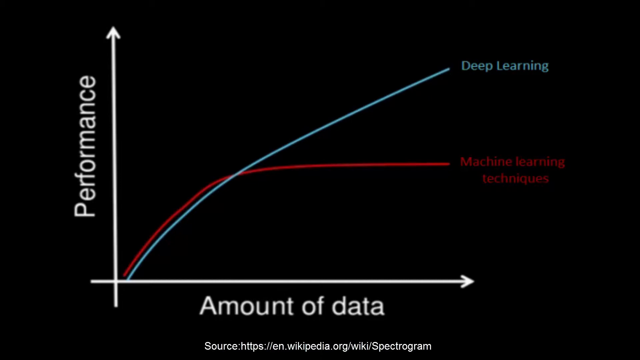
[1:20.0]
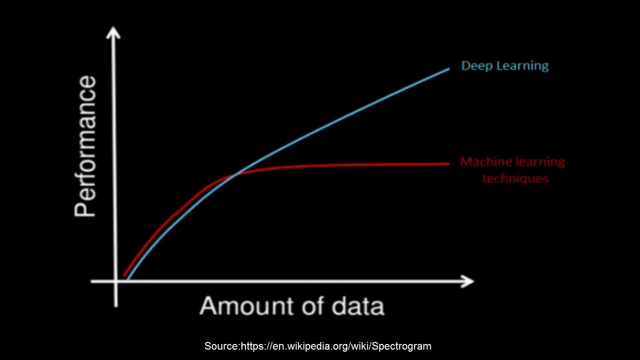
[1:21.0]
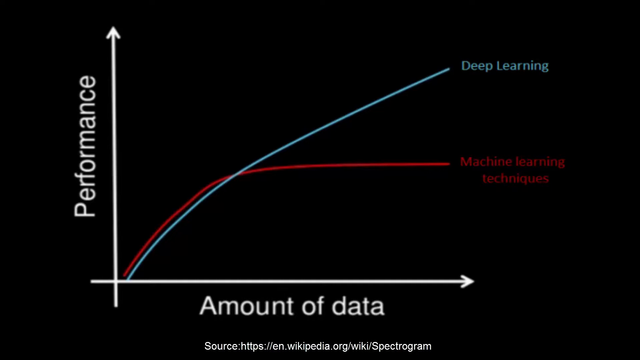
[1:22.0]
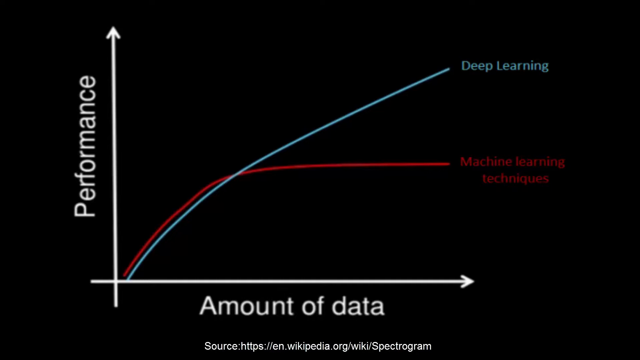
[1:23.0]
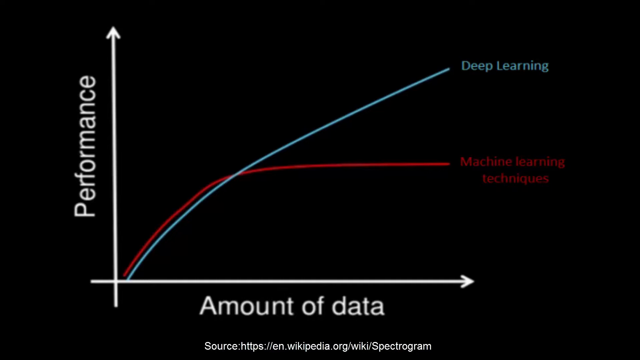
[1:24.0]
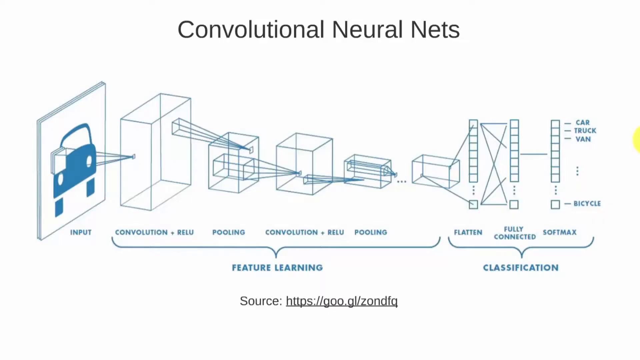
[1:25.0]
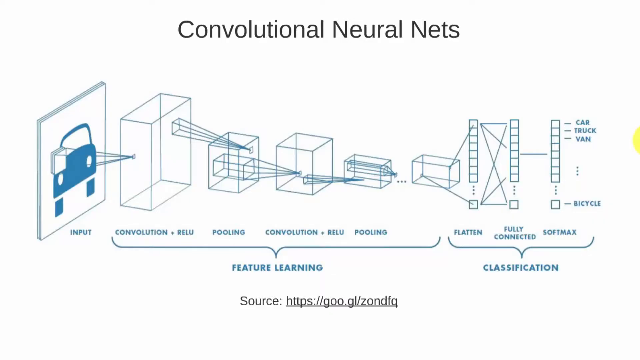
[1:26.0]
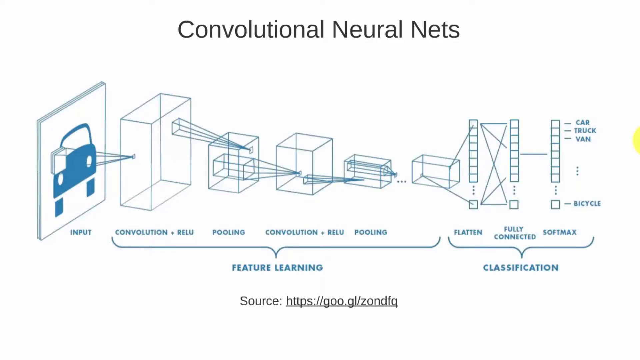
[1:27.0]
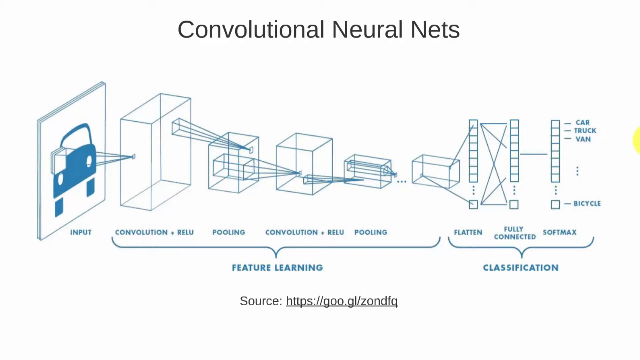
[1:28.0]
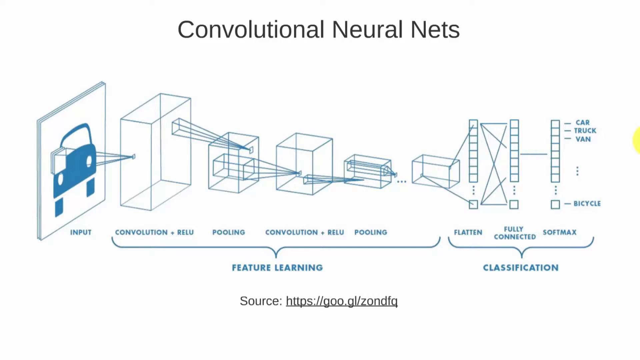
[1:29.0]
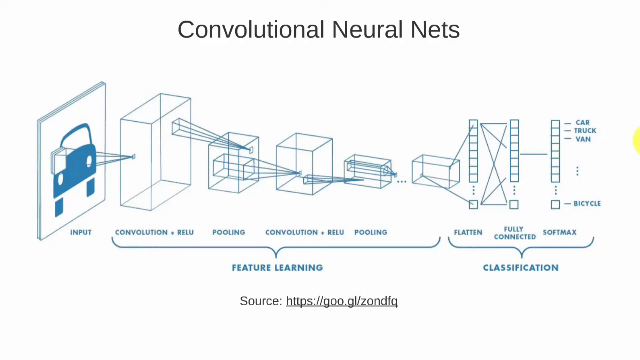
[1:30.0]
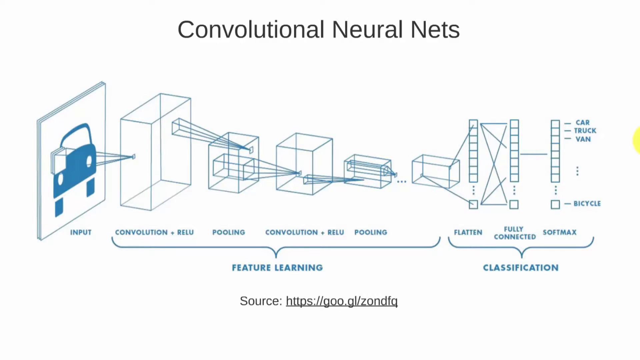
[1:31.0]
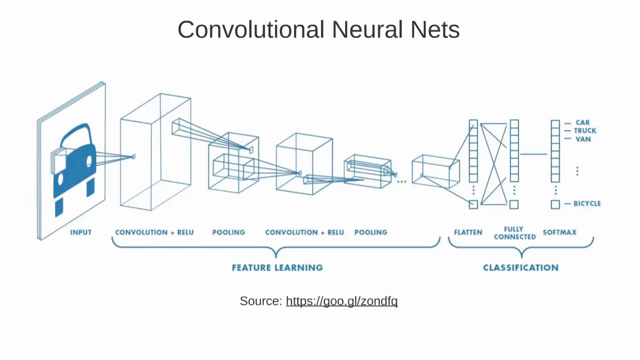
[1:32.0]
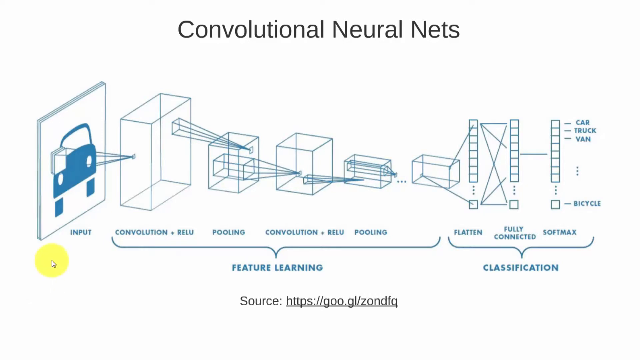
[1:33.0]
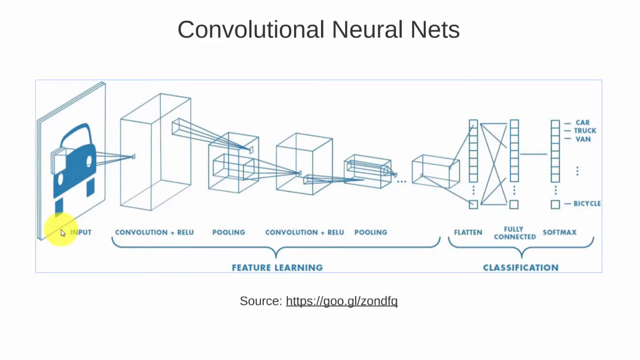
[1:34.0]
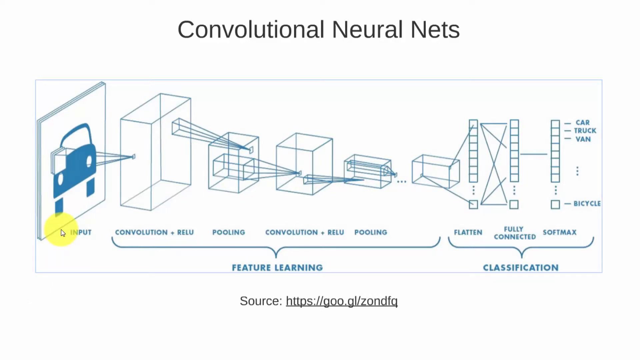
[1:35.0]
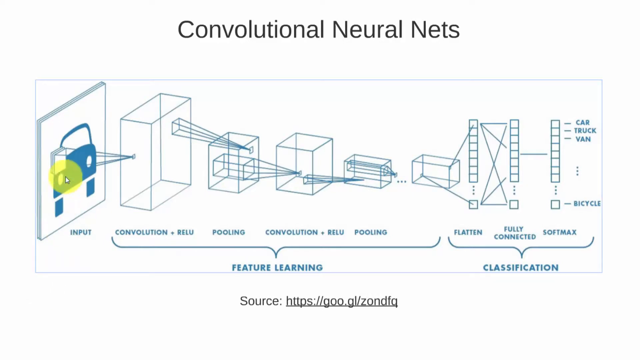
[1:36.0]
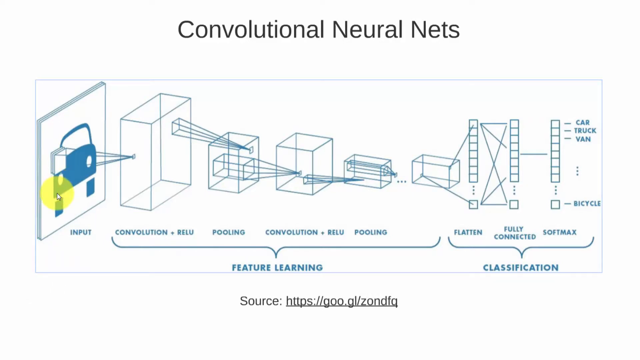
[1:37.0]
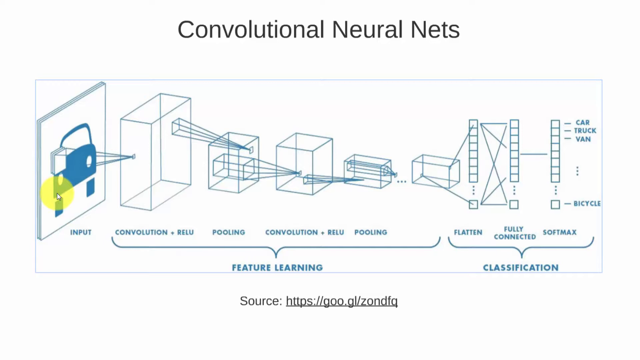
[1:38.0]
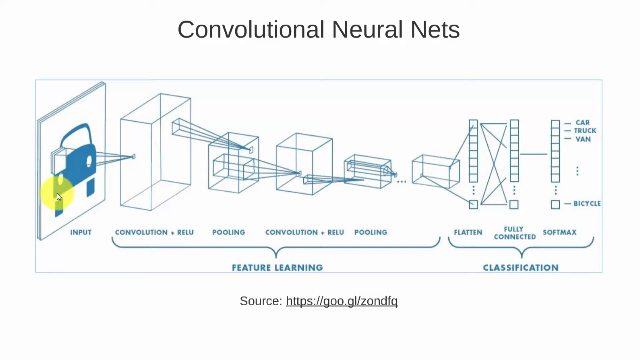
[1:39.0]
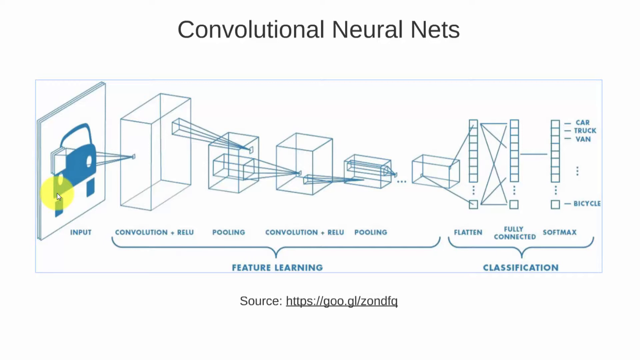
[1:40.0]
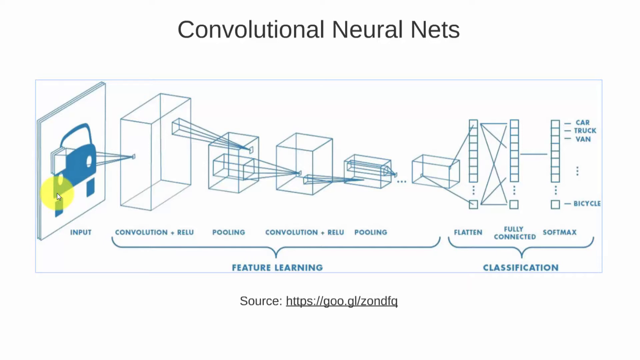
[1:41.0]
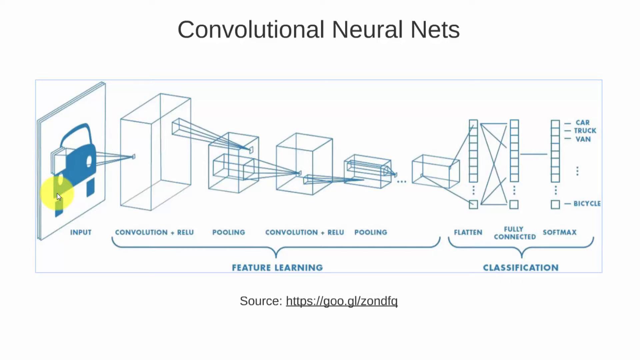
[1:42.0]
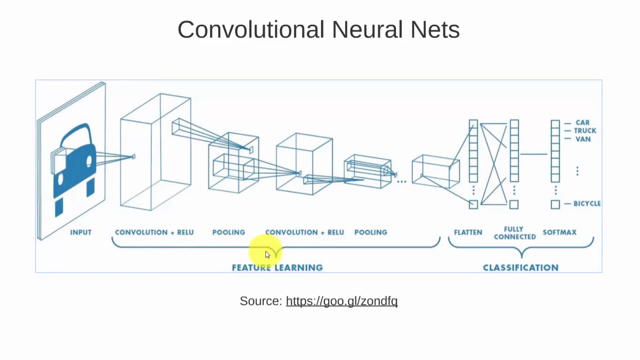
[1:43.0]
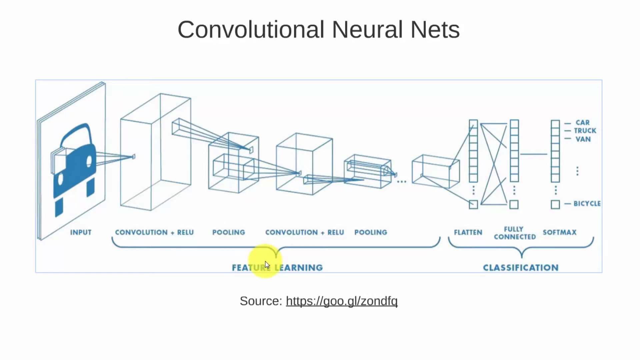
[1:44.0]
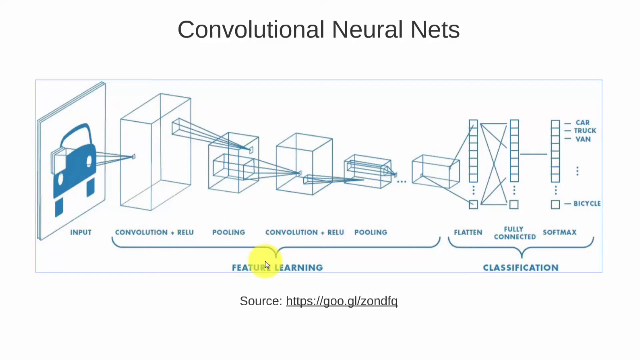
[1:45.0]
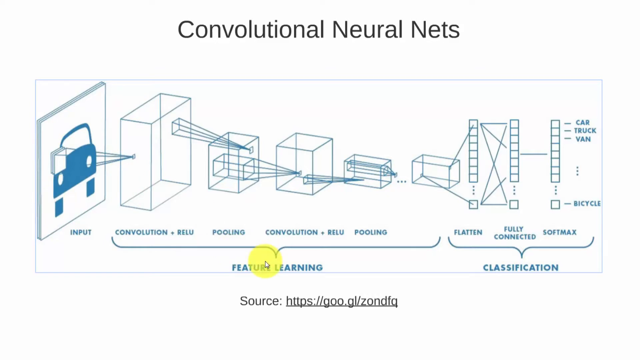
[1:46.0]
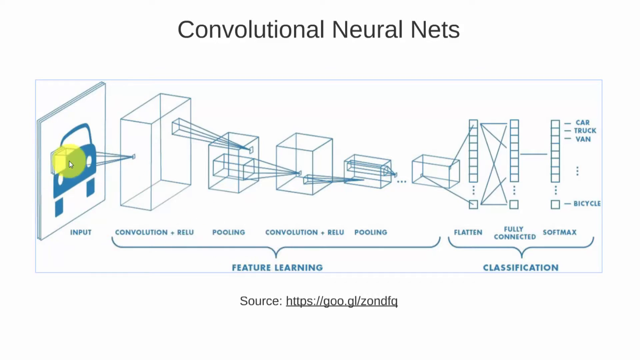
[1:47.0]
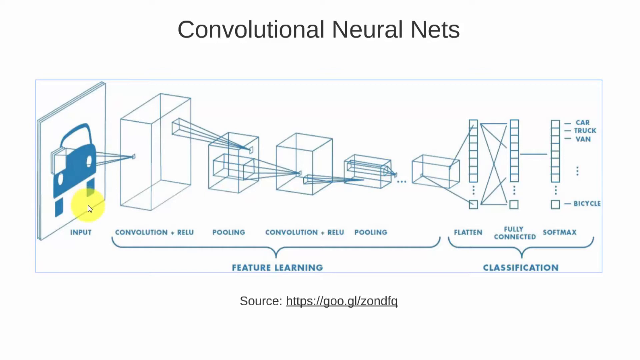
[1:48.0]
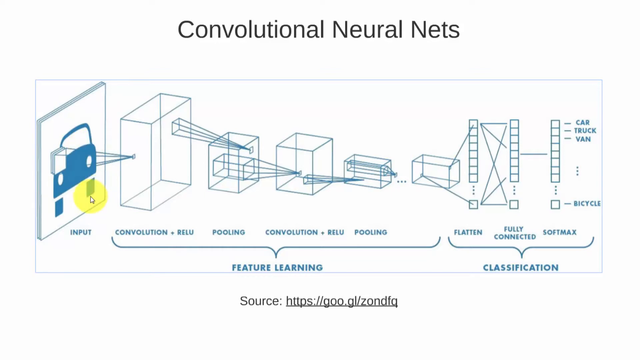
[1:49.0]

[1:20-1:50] A graph on a black background has a y-axis labeled "performance" and an x-axis labeled "amount of data". A green line starts at the beginning and goes upward, labeled "deep learning", and a red line is labeled "machine learning technique" in red. At the bottom it says "Wikipedia link". The video then cuts to a post or reference with "convolutional neural nets" at the top of the screen, and below it many cubes connecting to one another. Labels include "input", "convolution", "relu", "flattened", "fully connected", "softmax", "bicycle", "car", "truck" and "classification", and at the bottom it says "source" with google. A mouse cursor with a yellow bubble around it navigates the webpage, highlighting certain things, focusing on the left side of the page where one of the boxes has a blue car in it.